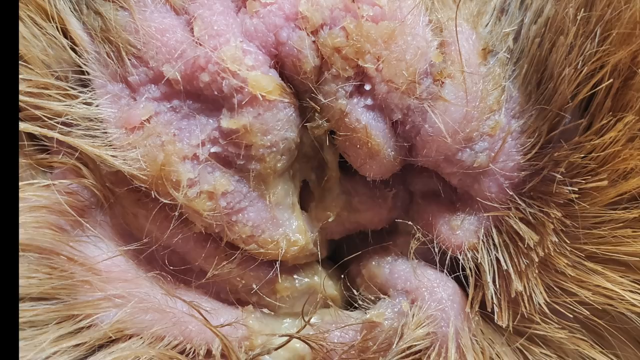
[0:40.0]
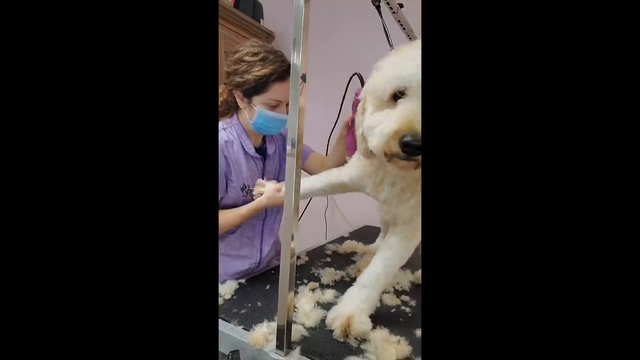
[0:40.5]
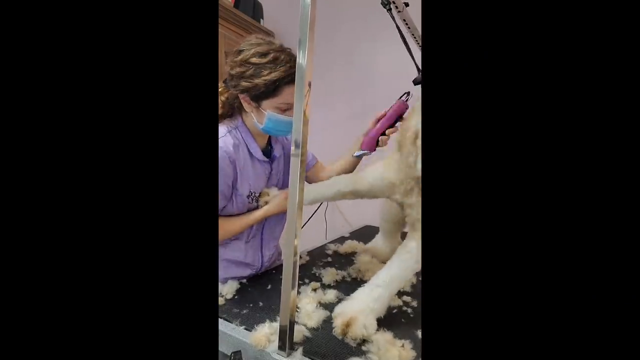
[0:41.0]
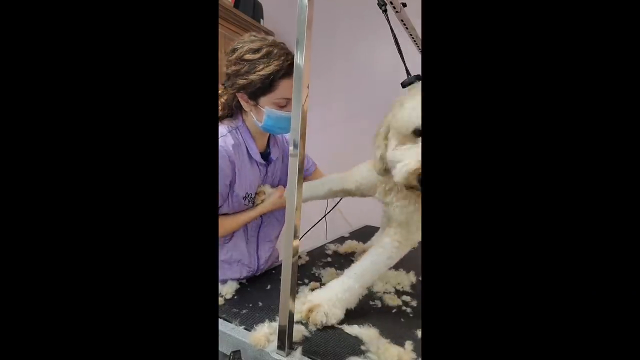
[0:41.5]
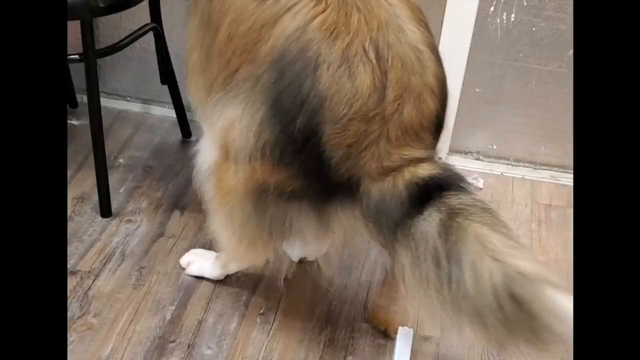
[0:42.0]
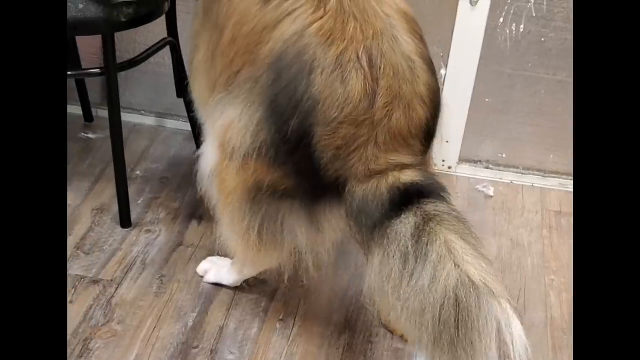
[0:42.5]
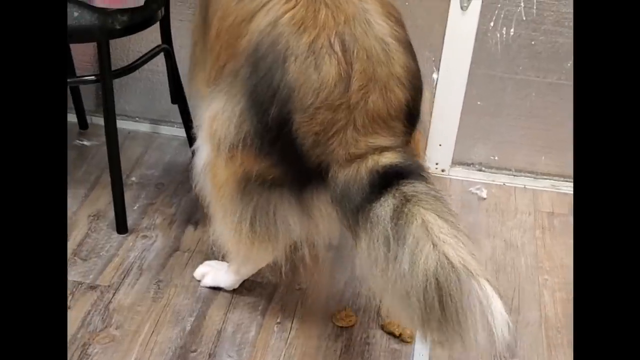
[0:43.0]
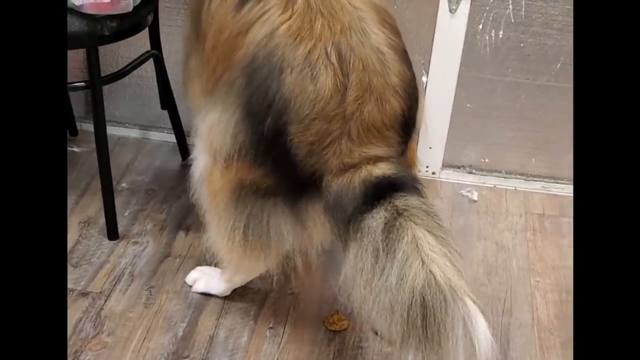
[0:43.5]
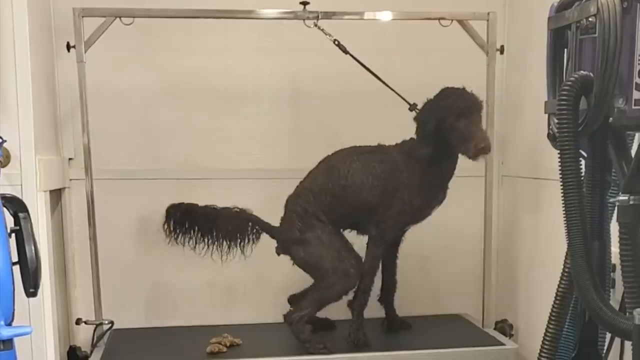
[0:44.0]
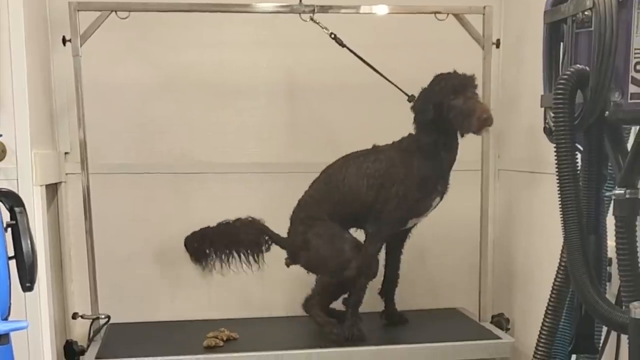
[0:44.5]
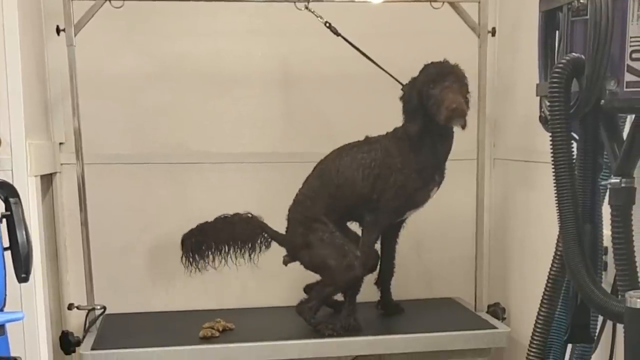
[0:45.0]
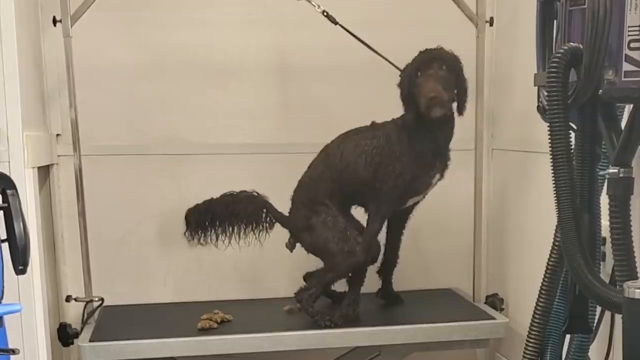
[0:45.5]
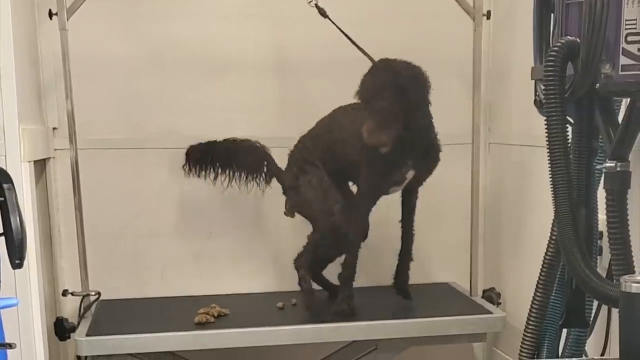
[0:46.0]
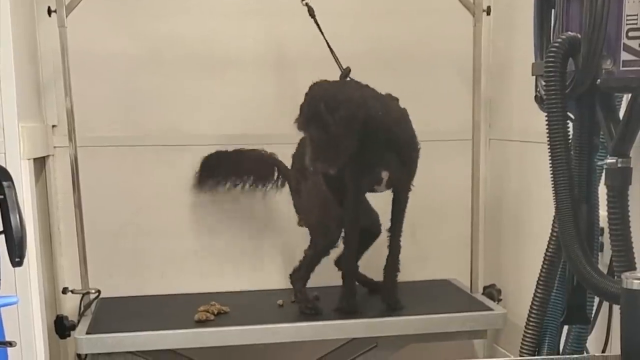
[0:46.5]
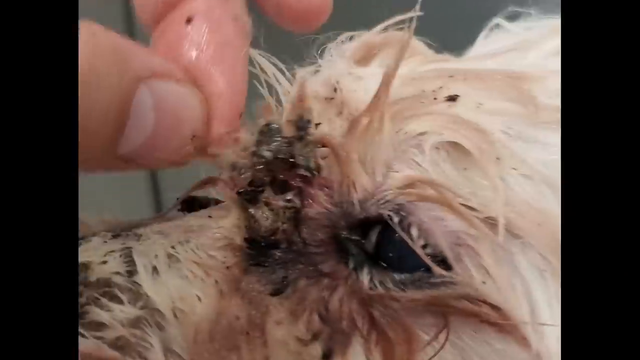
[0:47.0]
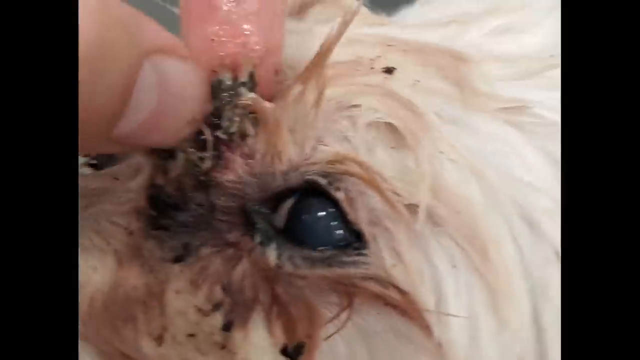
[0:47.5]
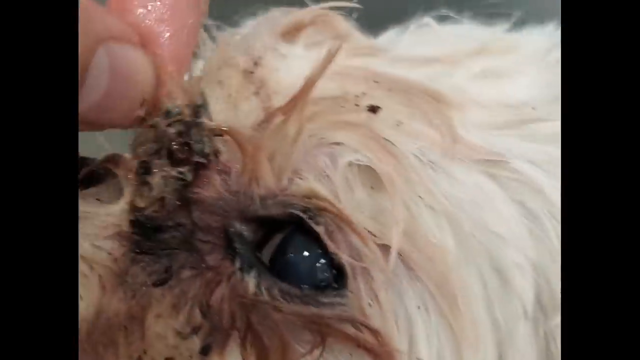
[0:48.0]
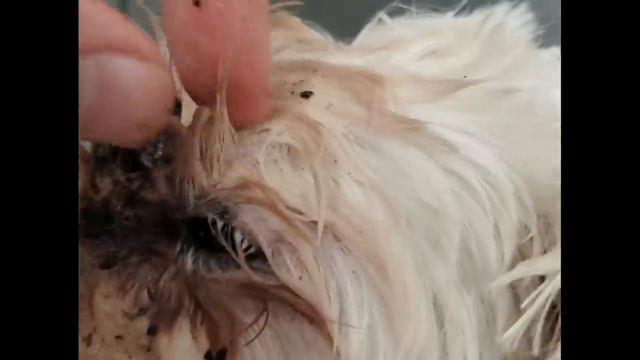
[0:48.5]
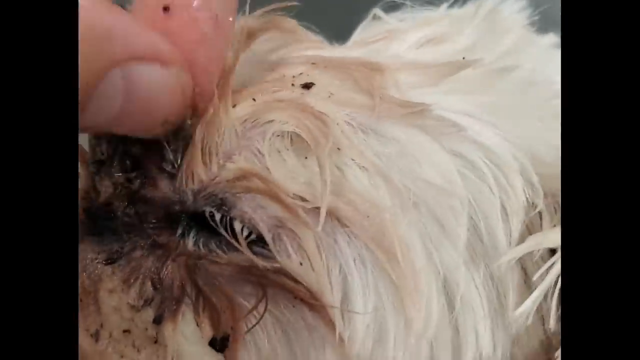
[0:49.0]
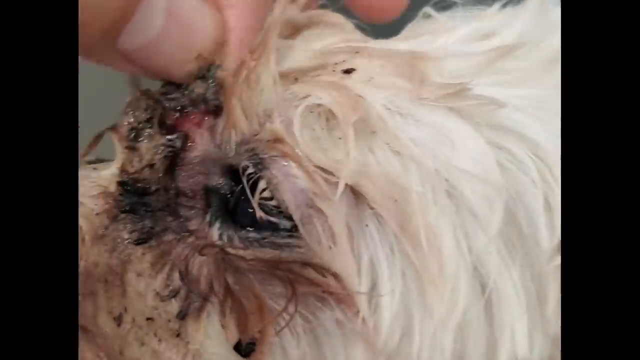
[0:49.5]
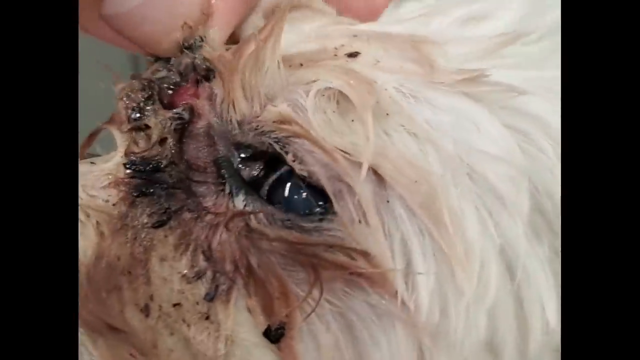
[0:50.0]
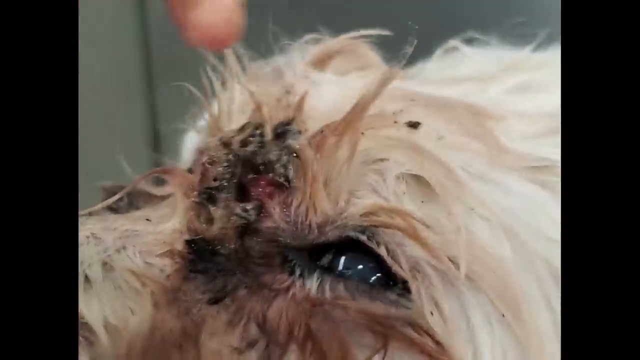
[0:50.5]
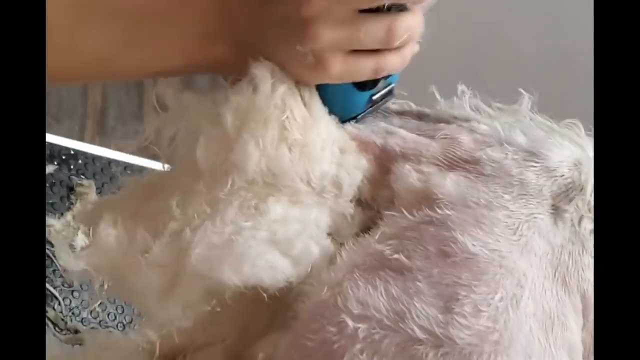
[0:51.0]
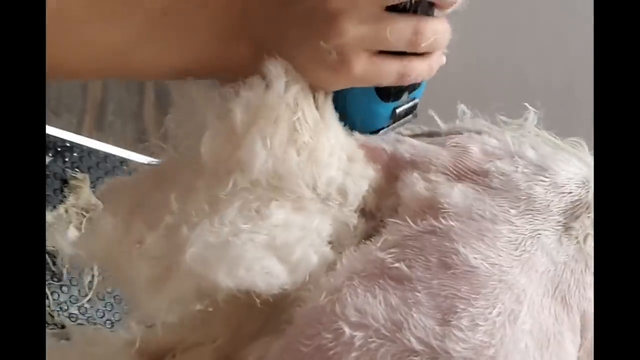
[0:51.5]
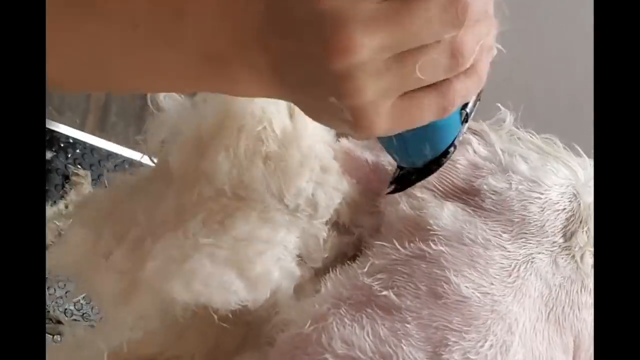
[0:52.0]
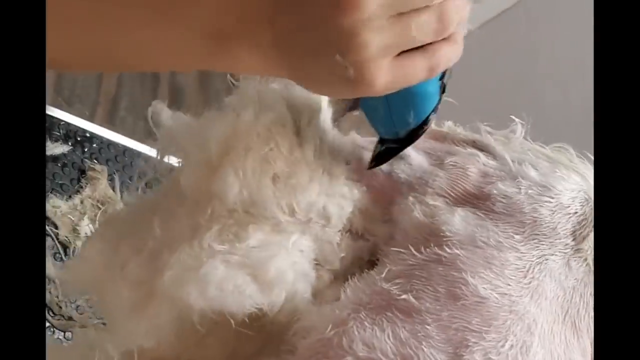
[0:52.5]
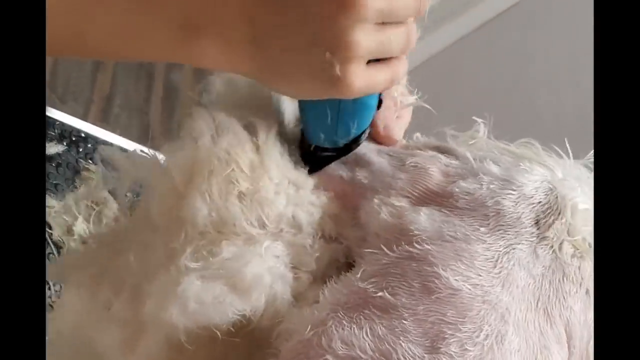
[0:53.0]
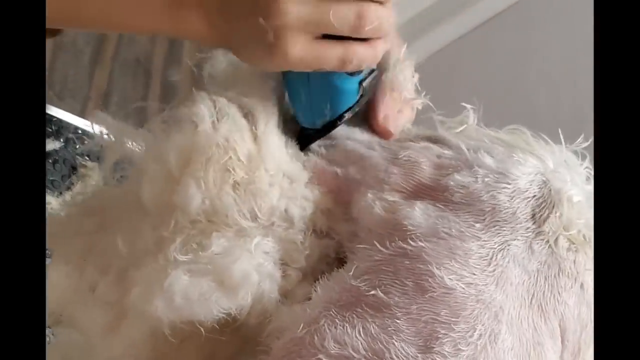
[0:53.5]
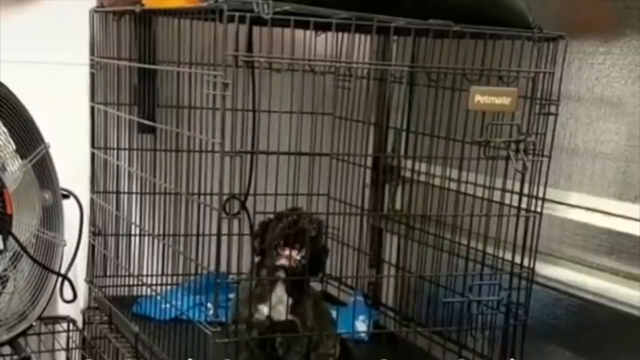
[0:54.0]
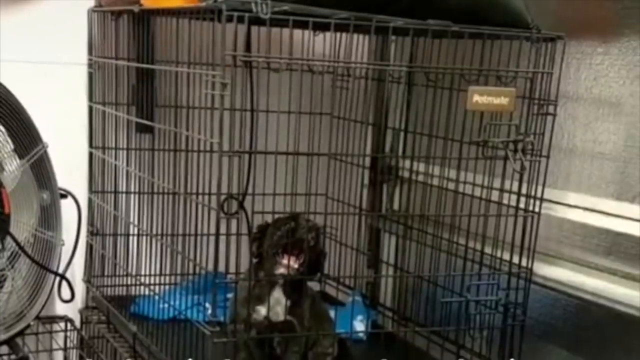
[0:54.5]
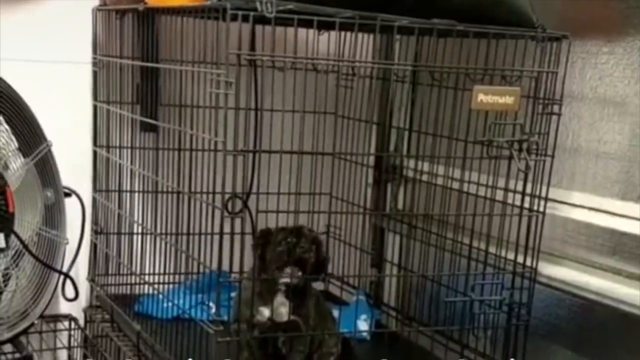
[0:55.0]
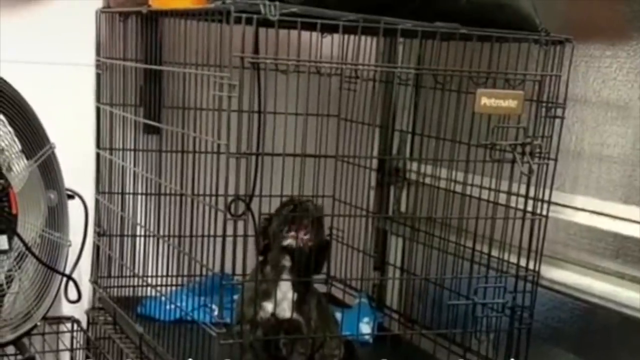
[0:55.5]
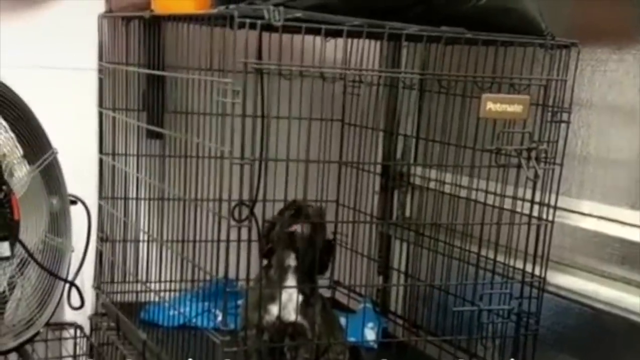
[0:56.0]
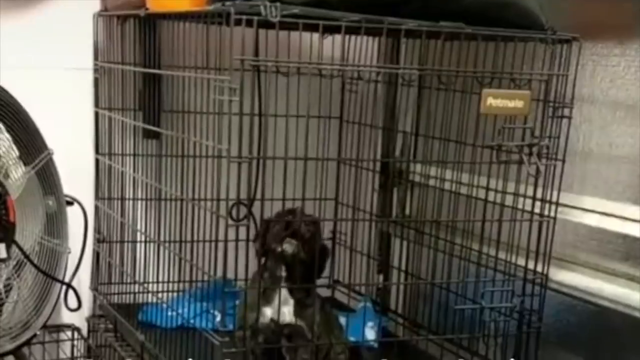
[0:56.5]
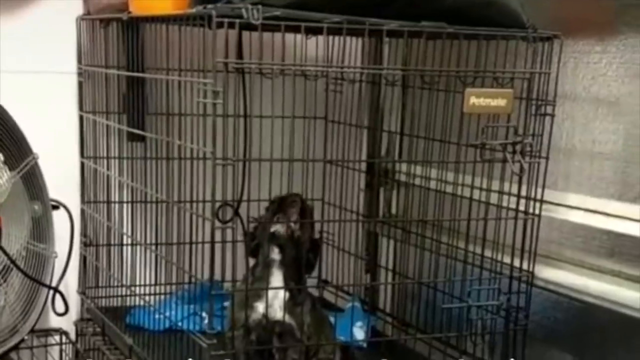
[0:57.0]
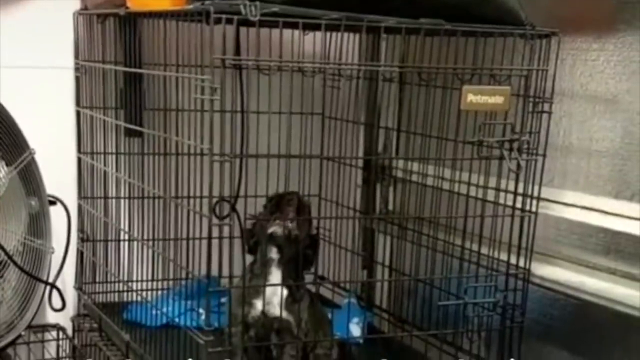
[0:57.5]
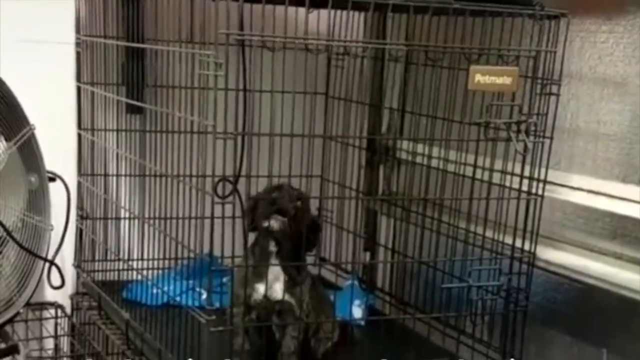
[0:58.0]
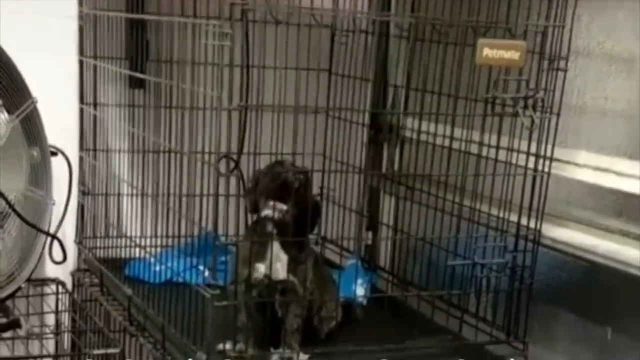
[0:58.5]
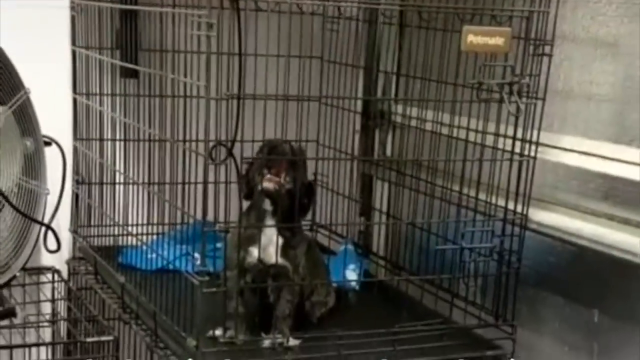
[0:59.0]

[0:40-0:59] A pet groomer in a magenta top appears with the words "what people think I do" as she grooms dogs that are peaceful and content. A few seconds later another shot says "what I actually do," and the dogs react aggressively as she grooms them. They apparently are not angry but do not know how to react: some are so excited they jump on her, seeming happy but very high energy, some are seen barking, and some bare their fangs. One shot shows a dog baring his fangs, almost smiling. The dogs seem excited by the groomer's actions, and their reactions to having their fur blown dry with a dryer or brushed and combed vary from dog to dog, though they all look more aggressive.